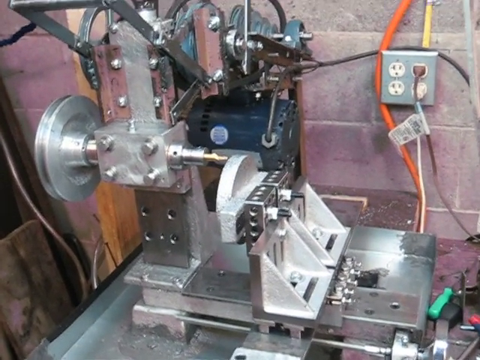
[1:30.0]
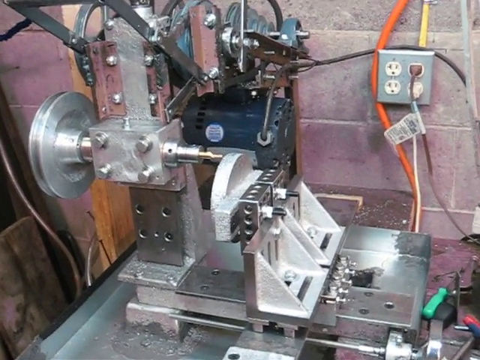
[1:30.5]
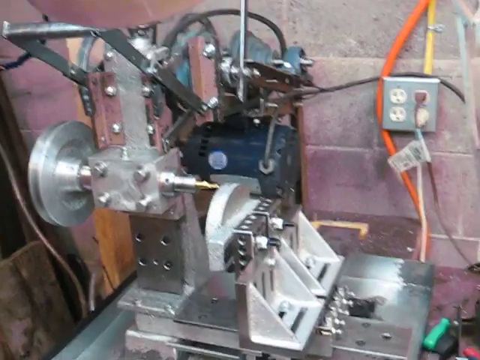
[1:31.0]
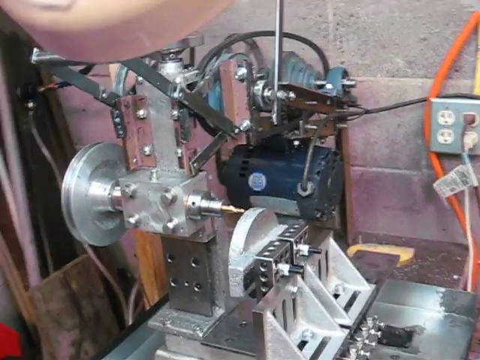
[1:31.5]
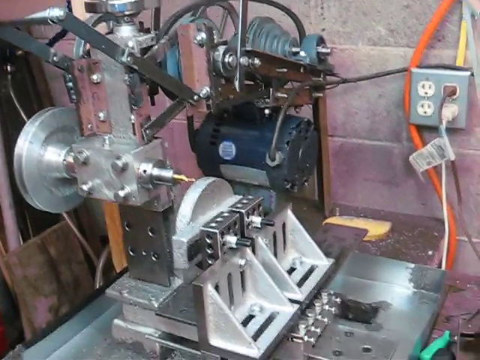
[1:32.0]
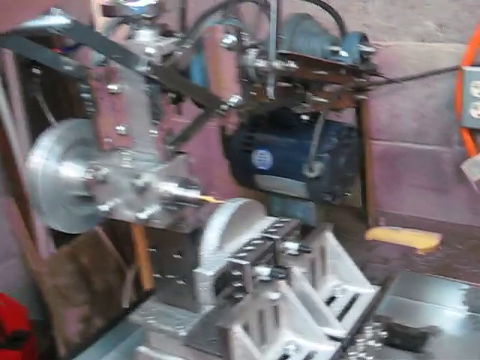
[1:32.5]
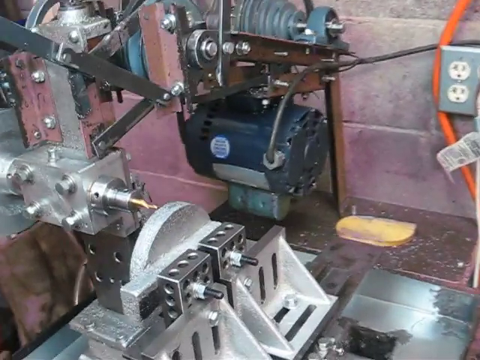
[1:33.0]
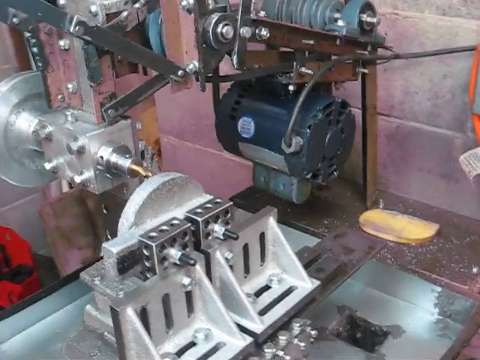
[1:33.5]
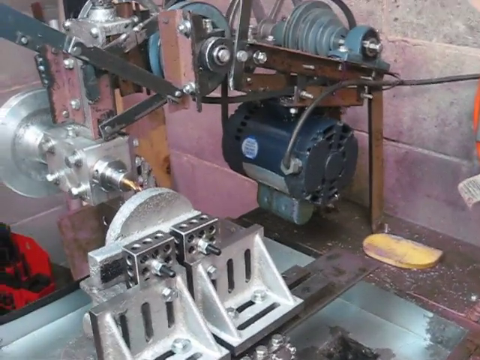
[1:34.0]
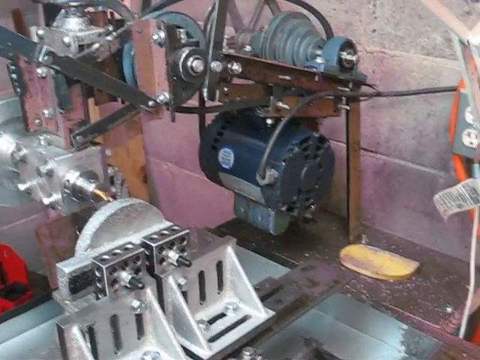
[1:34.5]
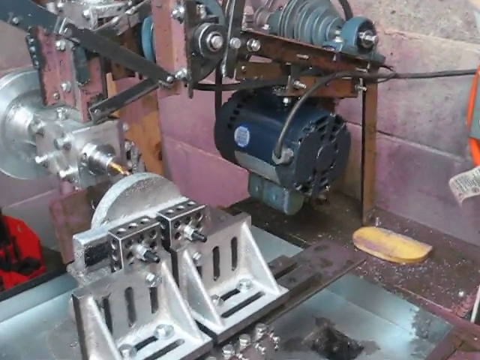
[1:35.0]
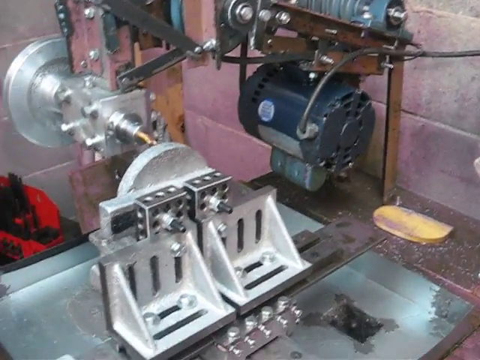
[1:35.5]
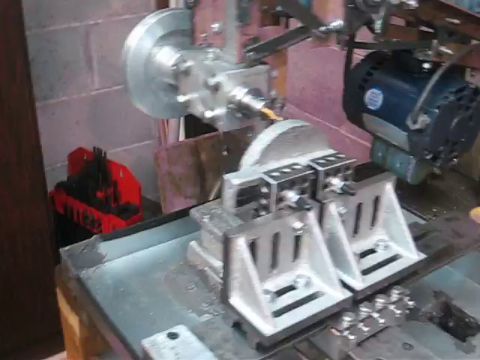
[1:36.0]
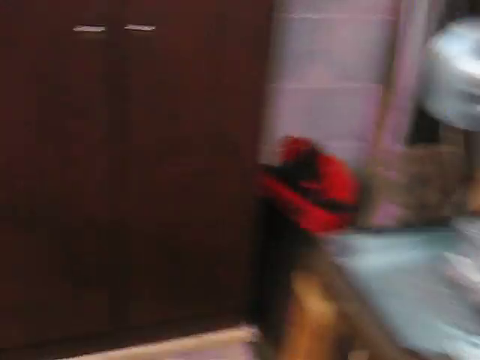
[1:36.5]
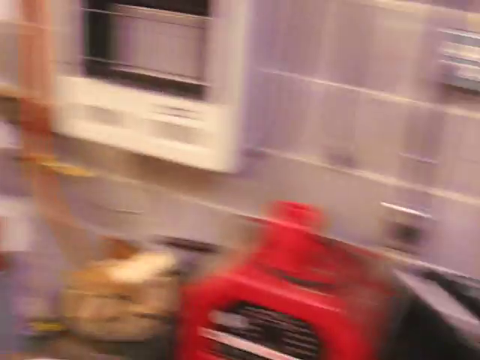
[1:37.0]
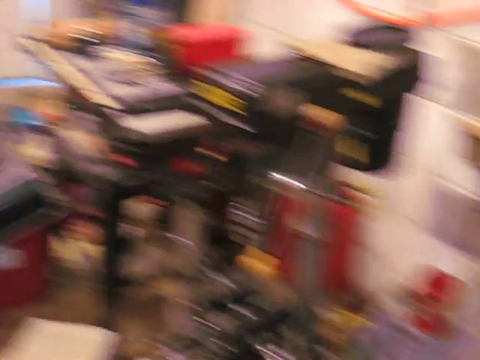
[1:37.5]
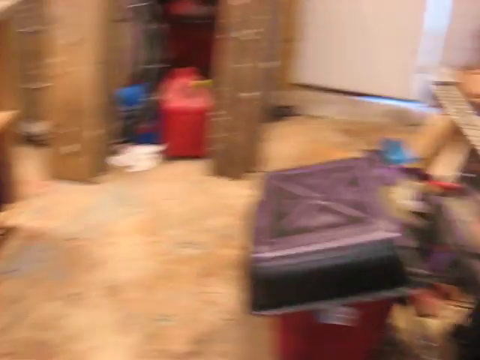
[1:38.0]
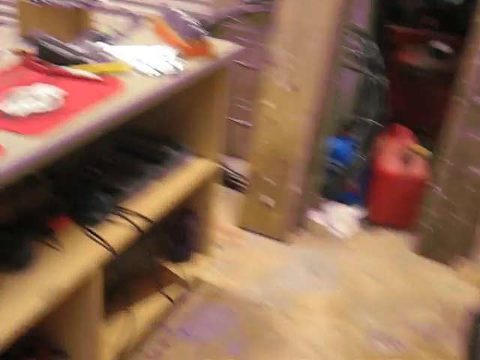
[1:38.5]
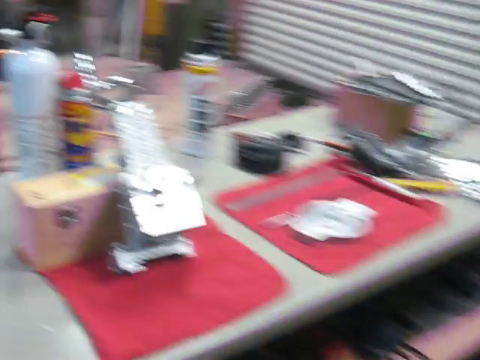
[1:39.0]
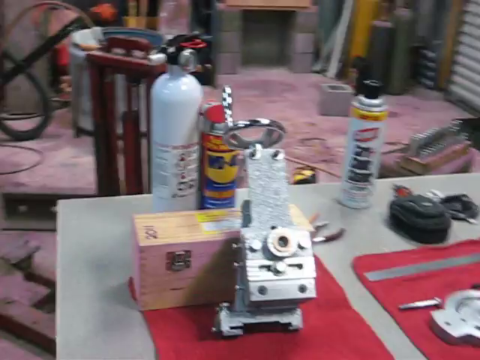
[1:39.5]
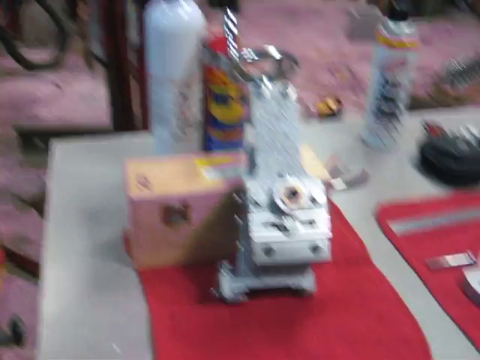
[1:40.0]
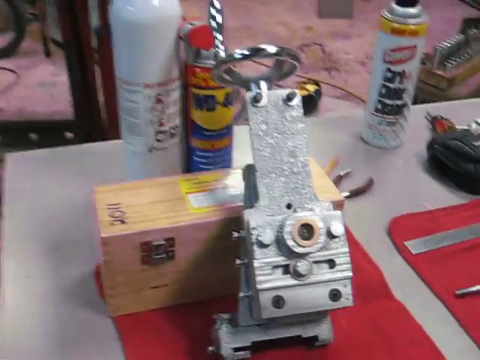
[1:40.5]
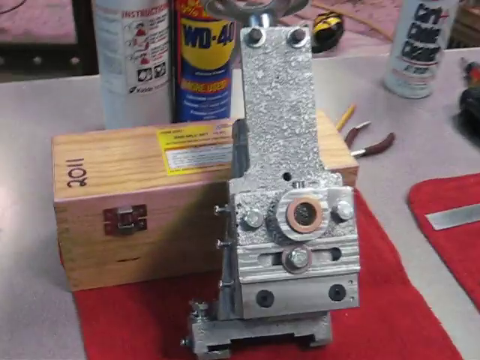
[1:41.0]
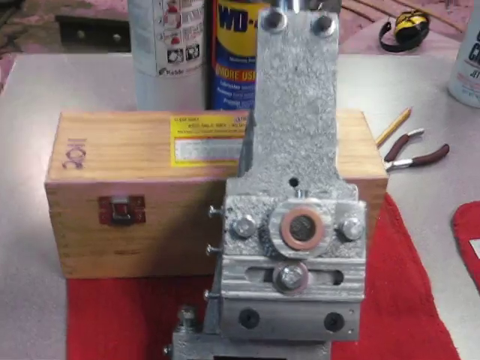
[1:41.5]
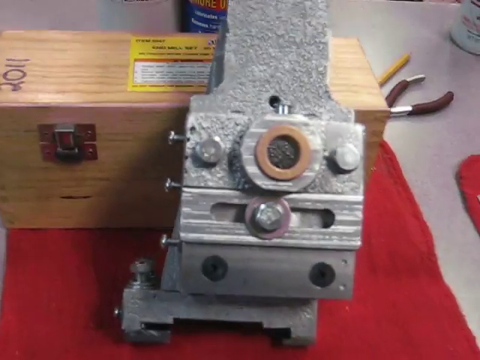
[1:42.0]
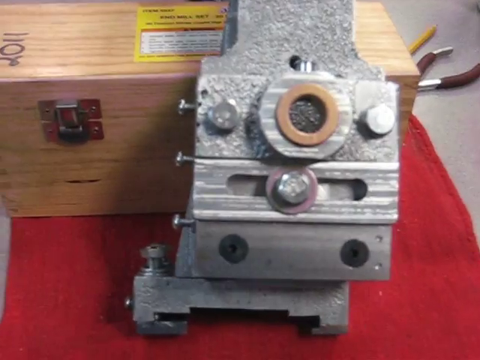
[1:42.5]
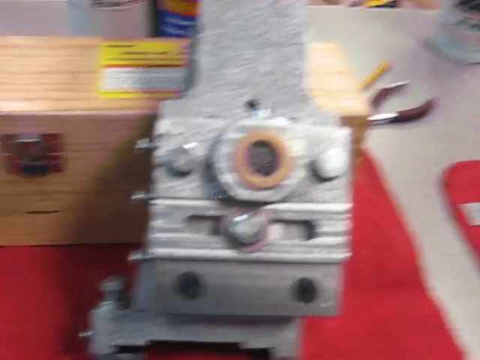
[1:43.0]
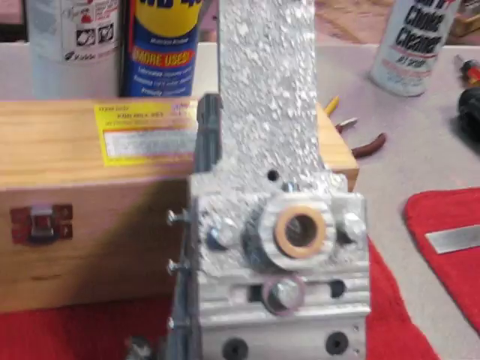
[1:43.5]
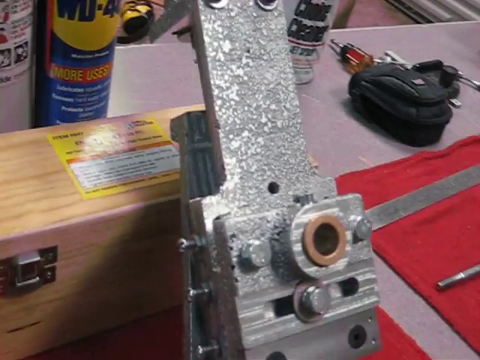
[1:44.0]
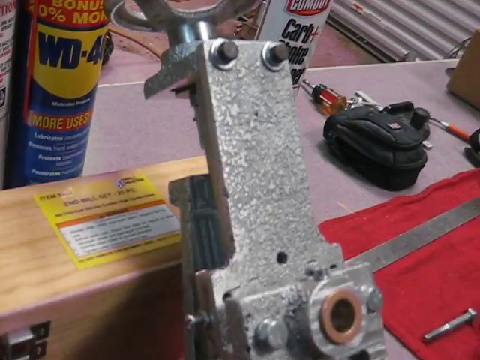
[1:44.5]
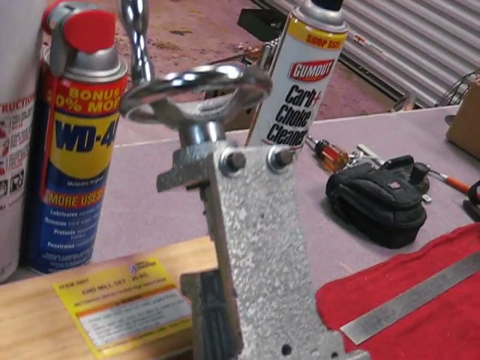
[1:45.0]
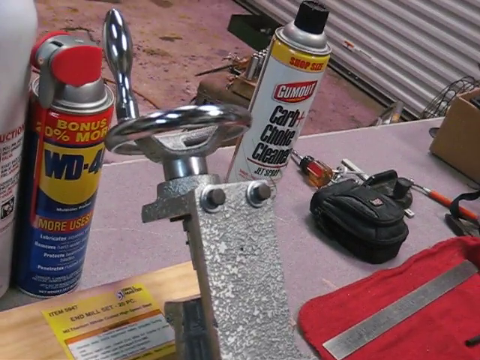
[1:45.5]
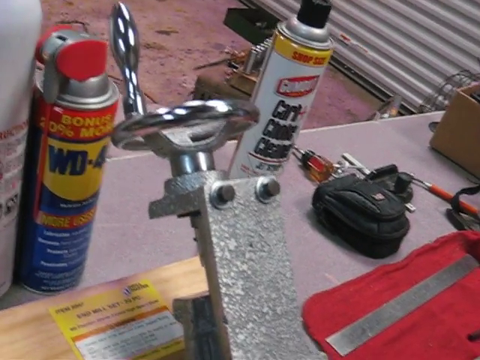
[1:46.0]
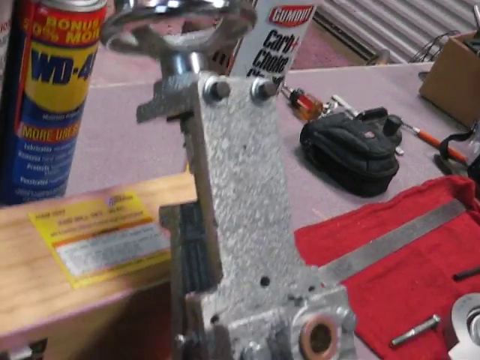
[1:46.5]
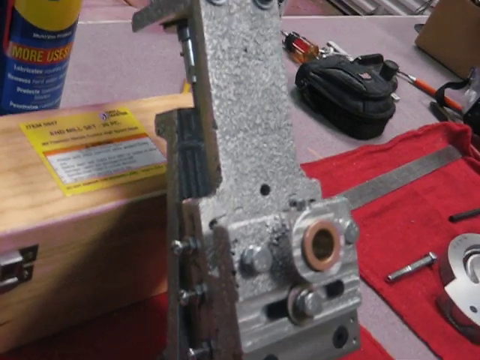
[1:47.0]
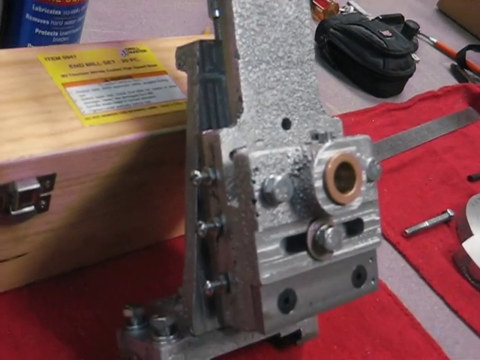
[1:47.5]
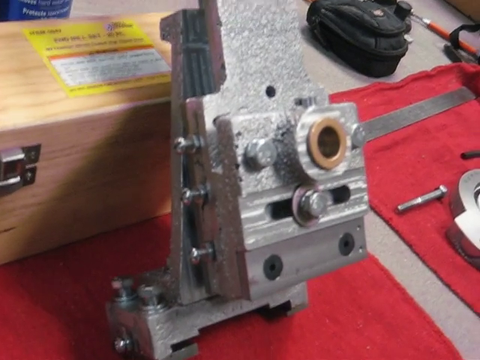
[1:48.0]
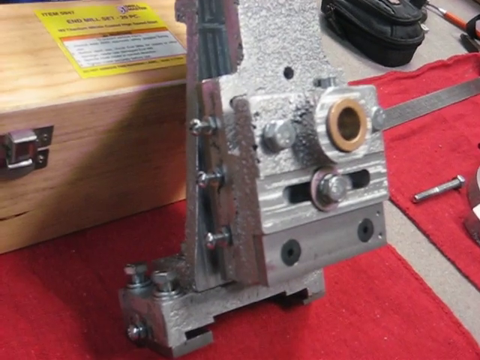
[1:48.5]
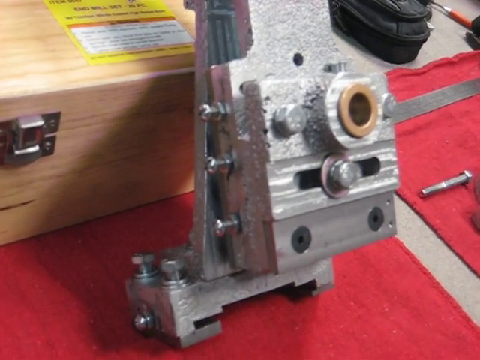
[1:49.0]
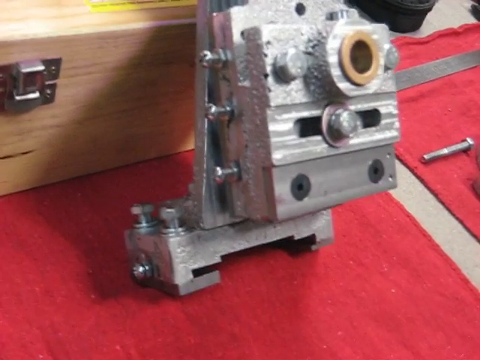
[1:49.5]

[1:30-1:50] A giant drill has many compartments, and everything is made of thick metal, with many thick bolts attached. A cylinder-like disc is attached to the left side of the drill, and there is a silver rectangle with four bolts. On its other side, a drill comes out, and the drill bit itself is gold. To the right of that is a giant clamp, also with many compartments, thick metal holding it together and many bolts. The table it is attached to is also made of metal, and some parts of the machine seem to be made of wood, with many bolts attached. Toward the right of the drill is a motor encased in almost black, dark gray metal.